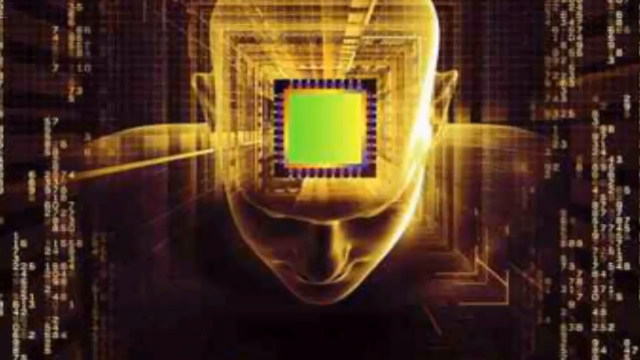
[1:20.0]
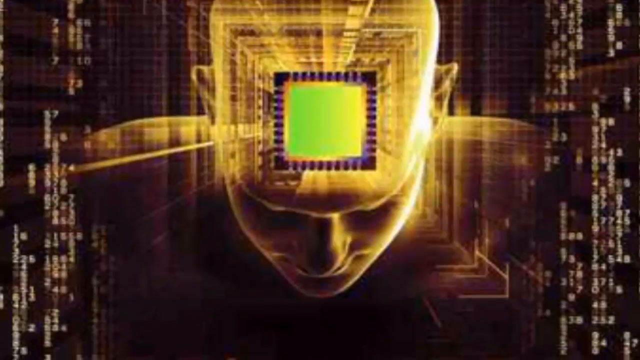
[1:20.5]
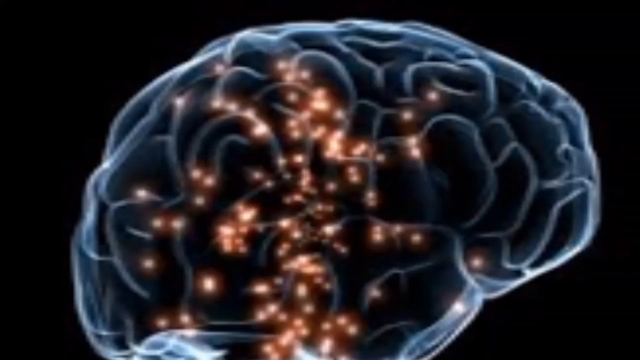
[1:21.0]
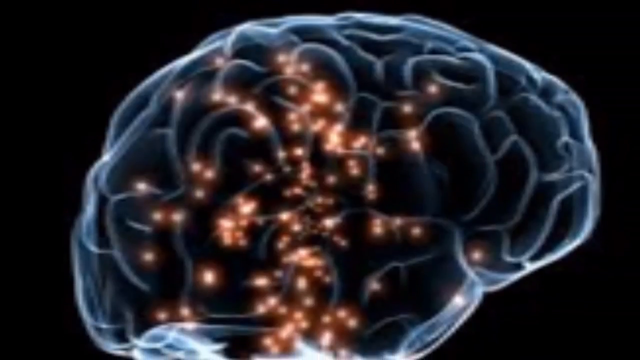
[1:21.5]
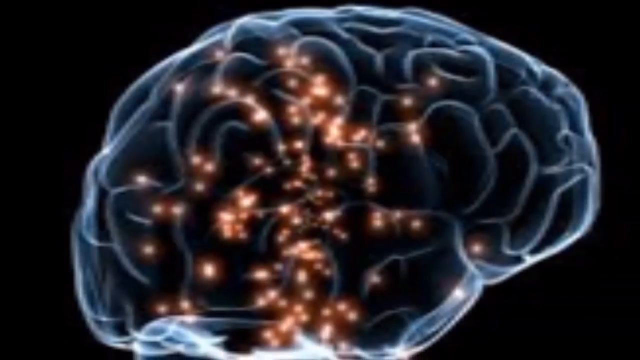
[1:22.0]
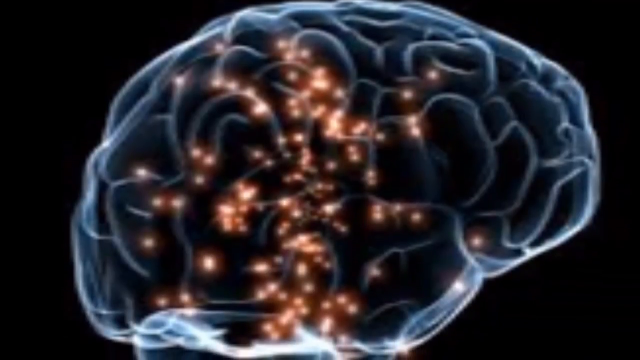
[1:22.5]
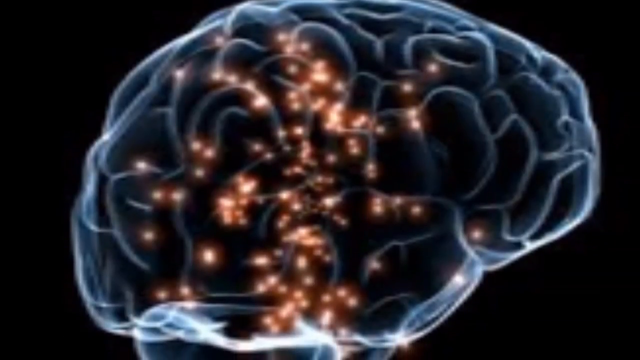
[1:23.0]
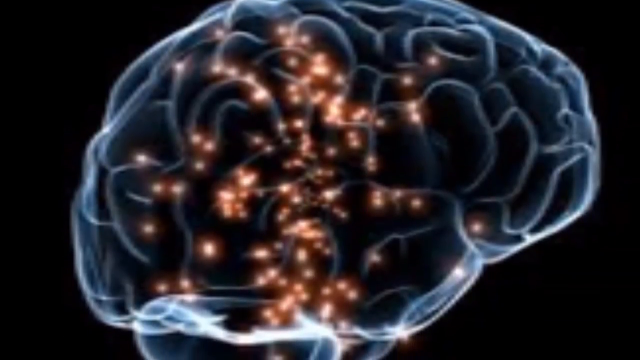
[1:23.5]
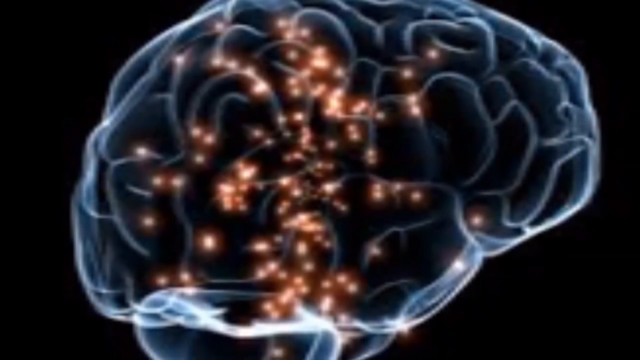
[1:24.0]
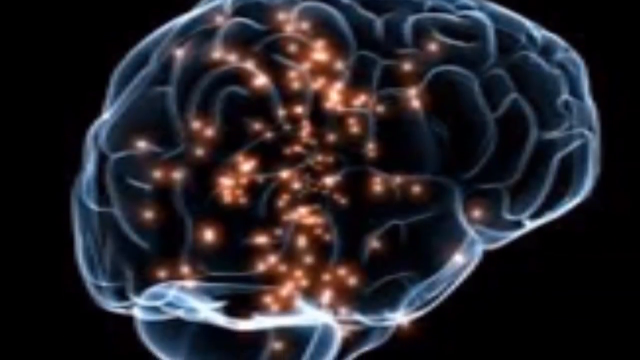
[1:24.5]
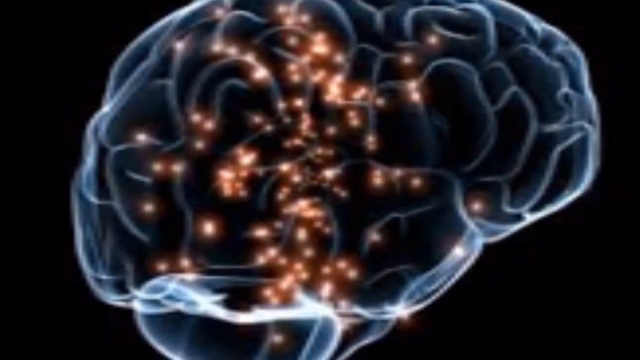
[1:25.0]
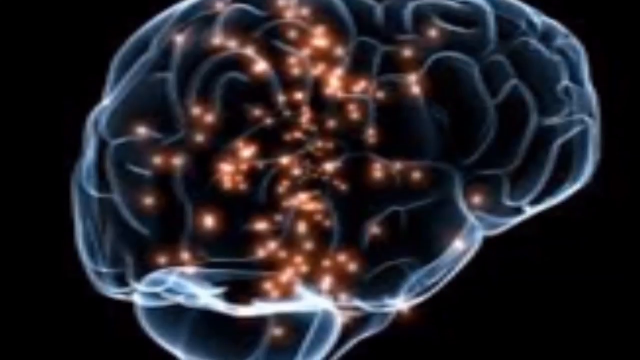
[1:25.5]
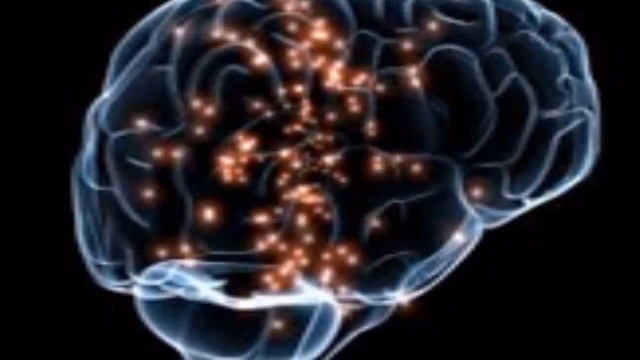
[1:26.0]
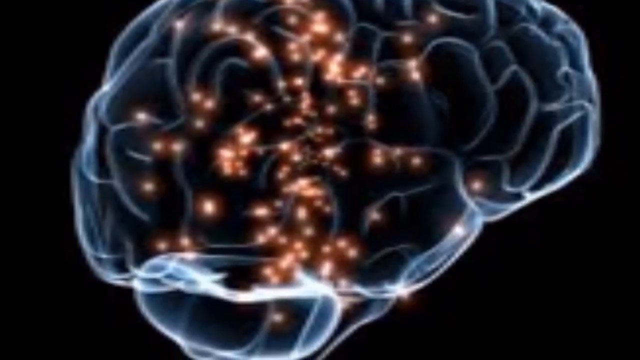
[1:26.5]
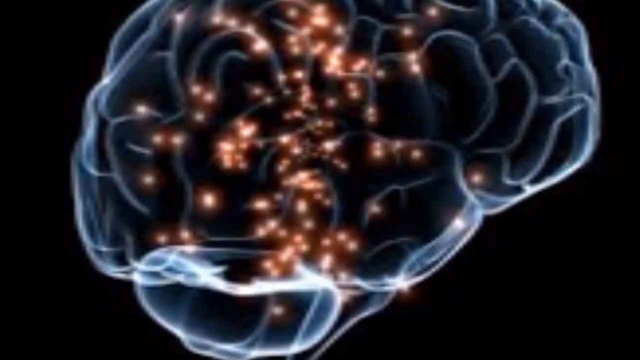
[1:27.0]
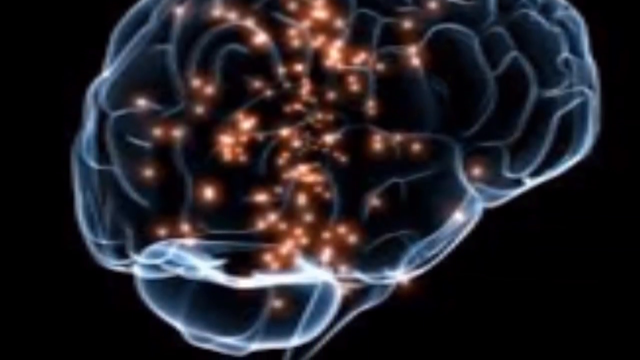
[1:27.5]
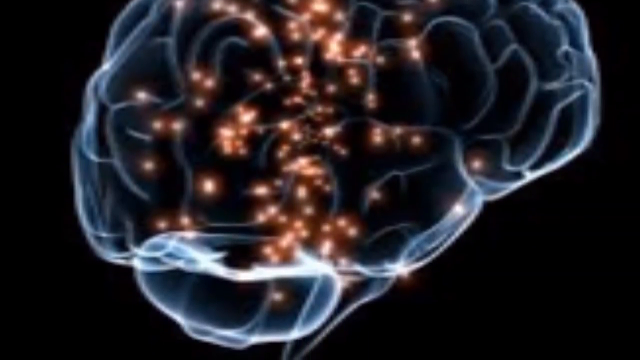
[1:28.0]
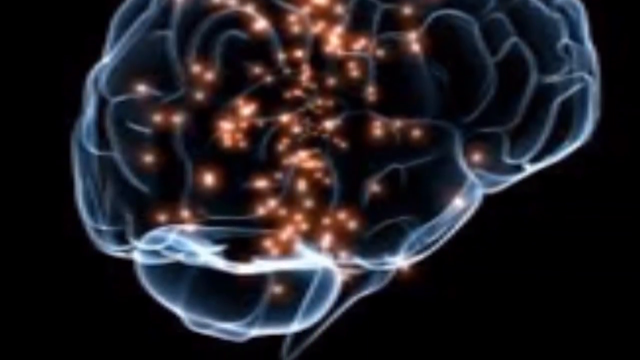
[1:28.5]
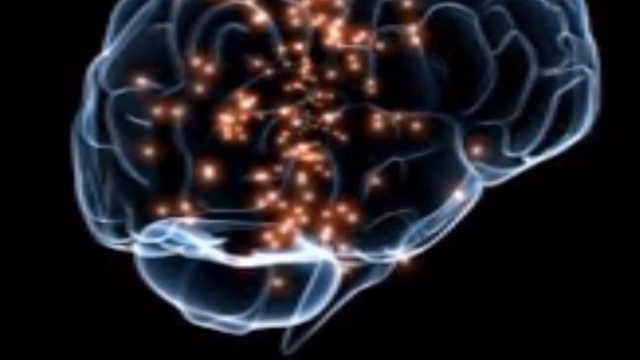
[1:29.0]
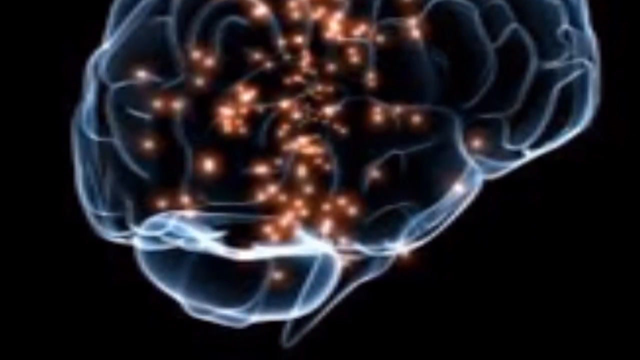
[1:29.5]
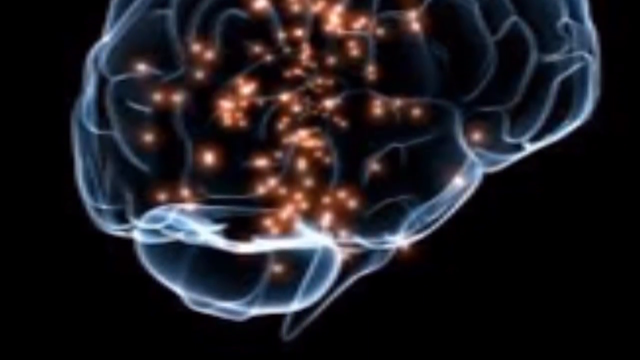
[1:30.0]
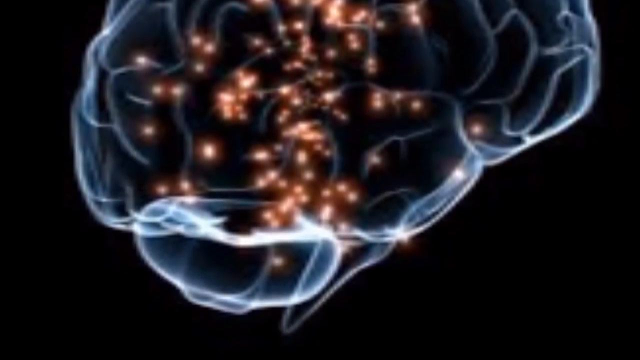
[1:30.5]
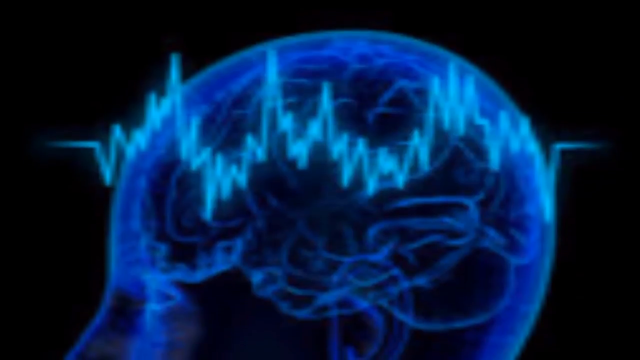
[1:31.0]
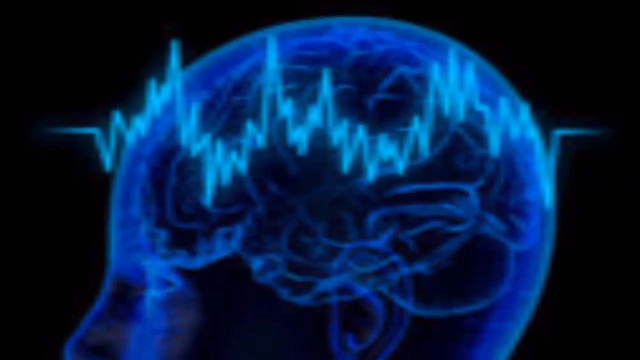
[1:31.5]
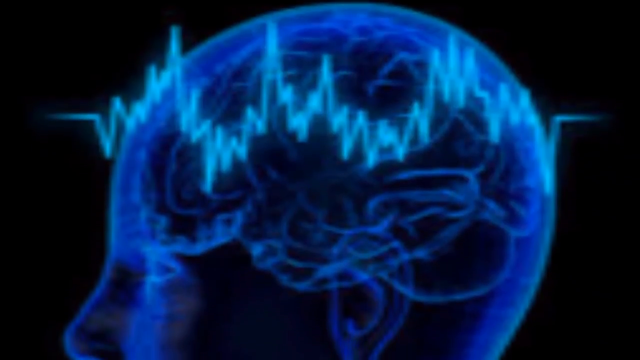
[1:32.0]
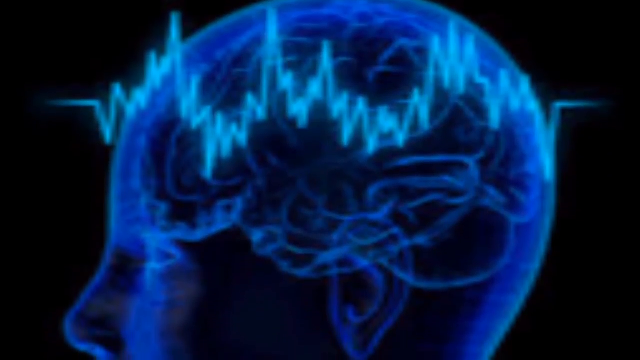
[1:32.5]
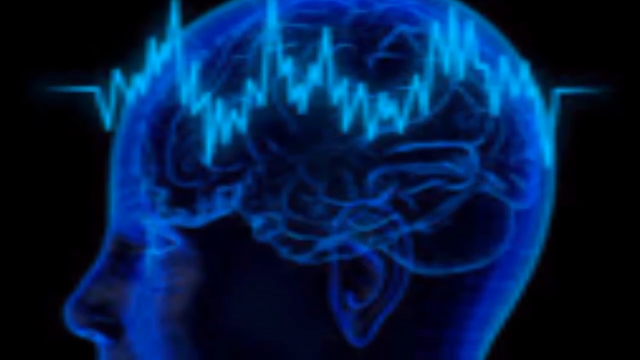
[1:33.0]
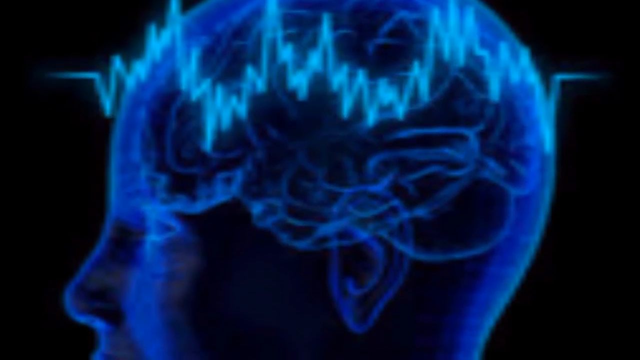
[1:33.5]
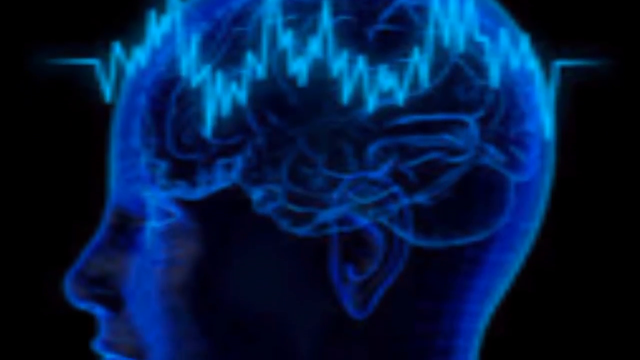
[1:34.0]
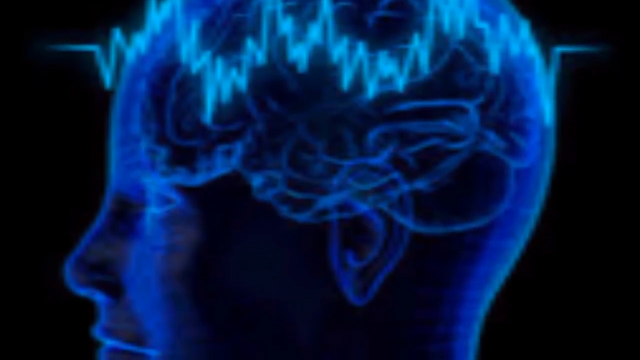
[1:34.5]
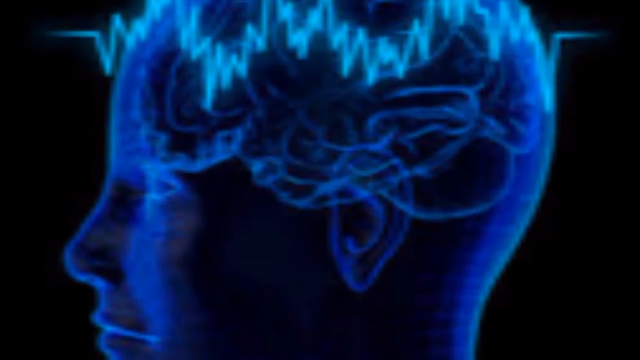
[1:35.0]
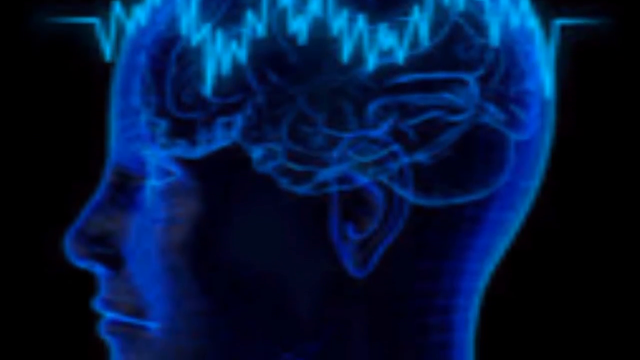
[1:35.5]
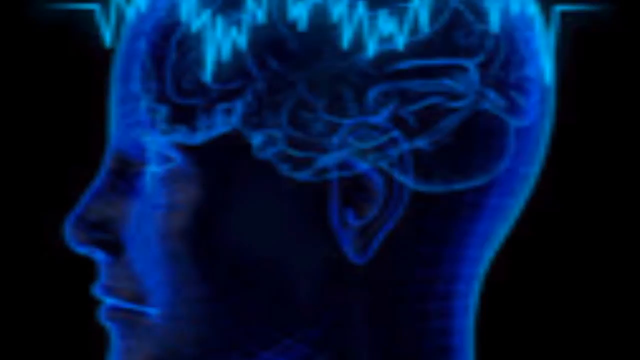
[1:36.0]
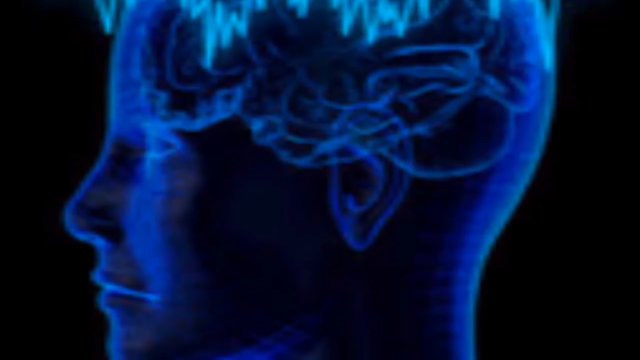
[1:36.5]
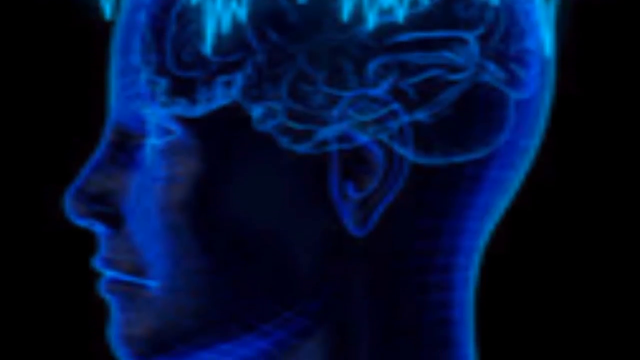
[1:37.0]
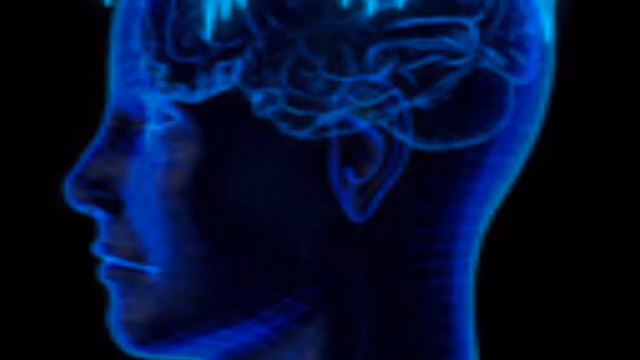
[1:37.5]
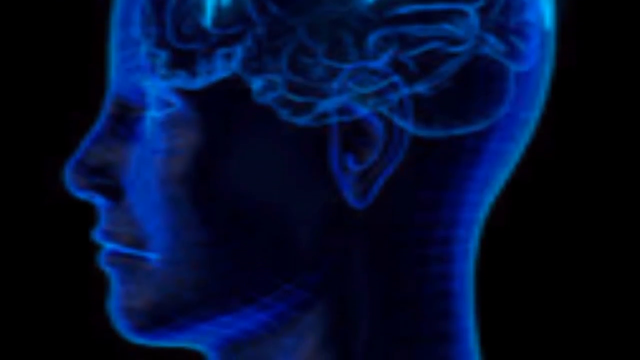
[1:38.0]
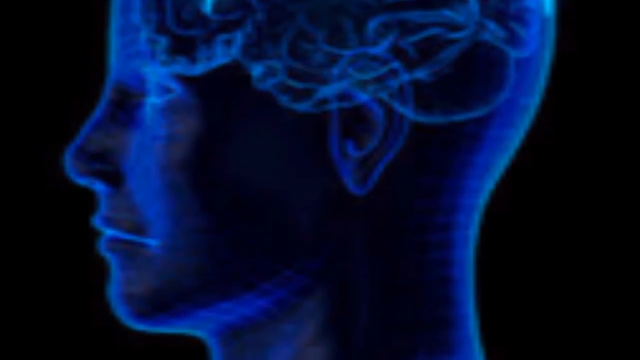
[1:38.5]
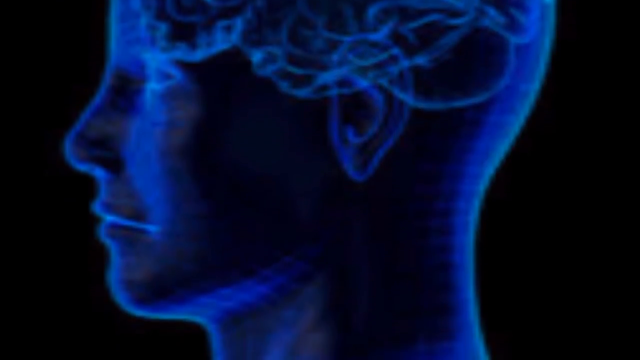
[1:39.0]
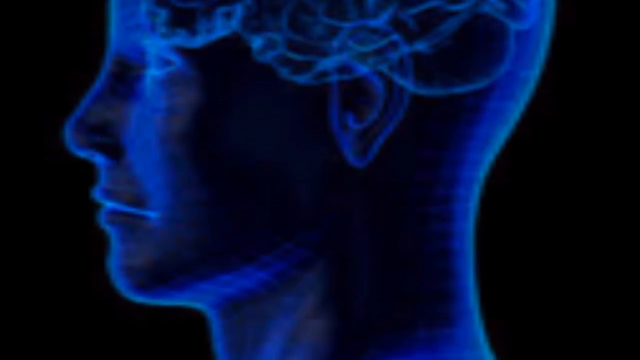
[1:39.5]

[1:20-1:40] The previous image remains for a brief second before the image turns to a holographic brain outlined in a purplish blue color, with tiny orange dots kind of scattered throughout the left-hand side of the brain. The camera continues to move down, as it does with the other images. The next image is a blue brain shape with what look like heart-rate-monitor screen lines running through it in a slightly lighter blue, against a black background. As the camera moves down, it shows the outline of a person's nose and ear: a person's head and face outlined in blue, seen from a side view. The shot ends when the camera reaches about the person's upper neck.